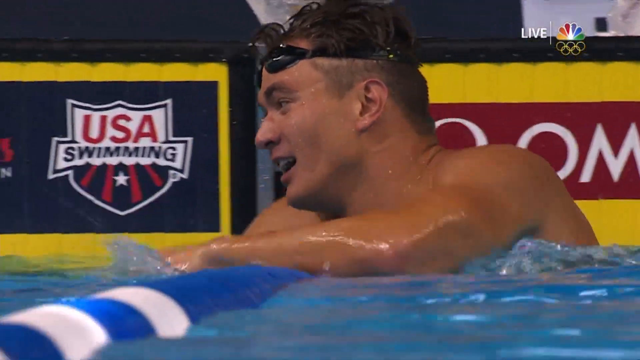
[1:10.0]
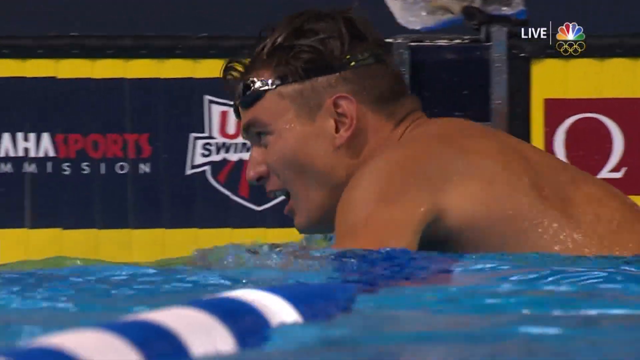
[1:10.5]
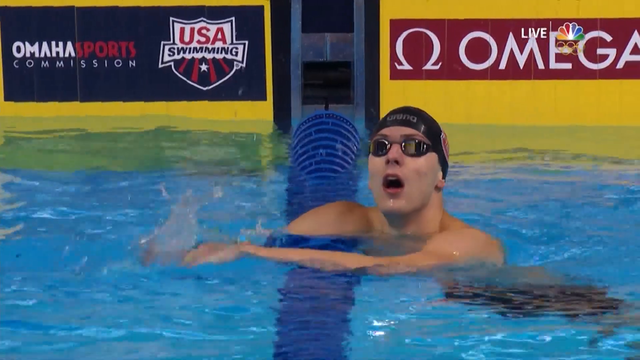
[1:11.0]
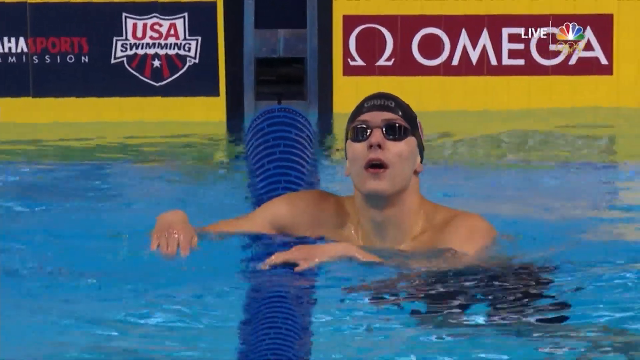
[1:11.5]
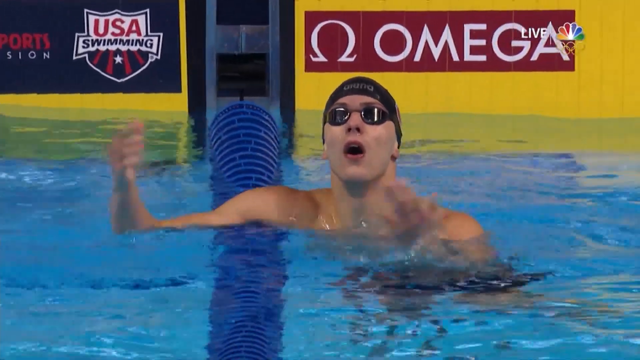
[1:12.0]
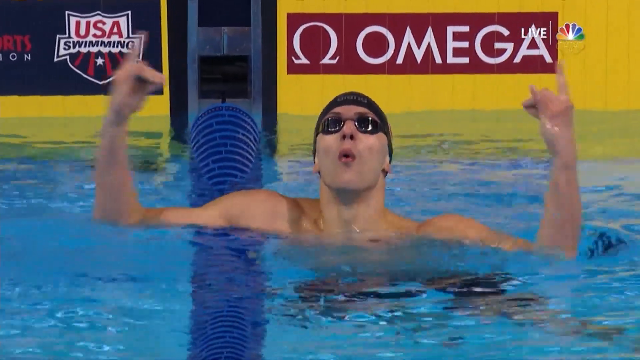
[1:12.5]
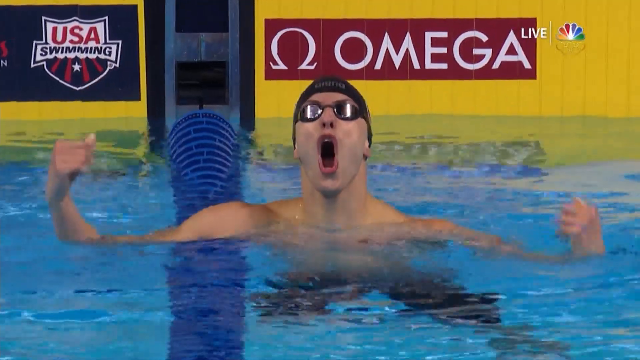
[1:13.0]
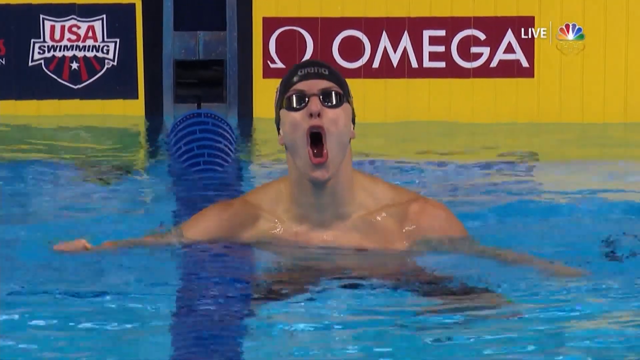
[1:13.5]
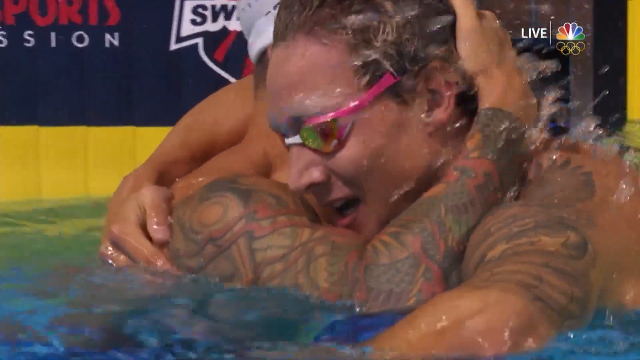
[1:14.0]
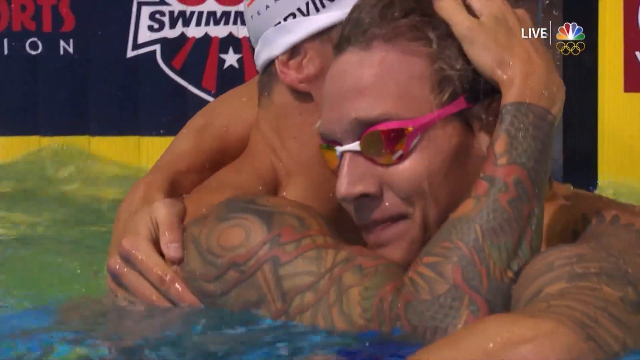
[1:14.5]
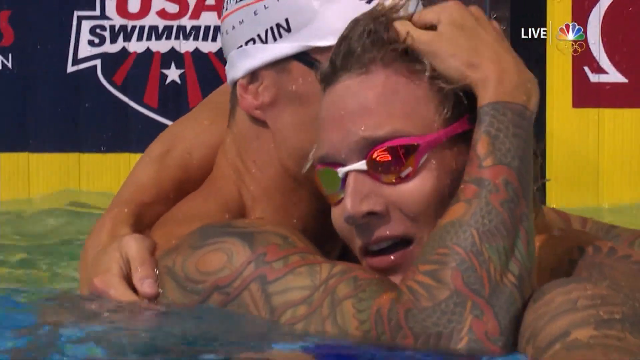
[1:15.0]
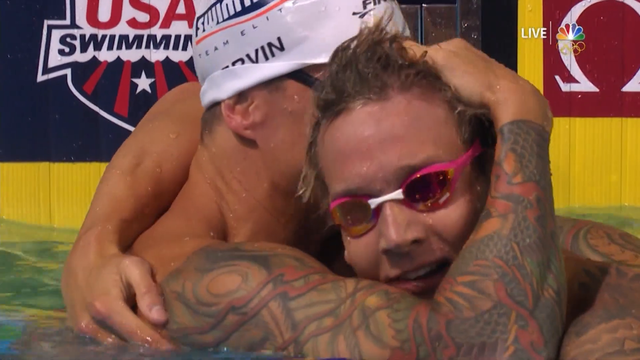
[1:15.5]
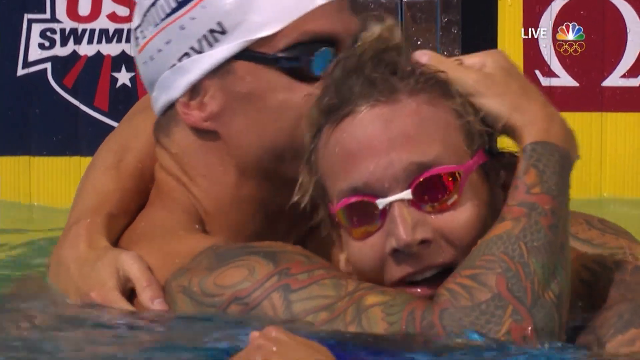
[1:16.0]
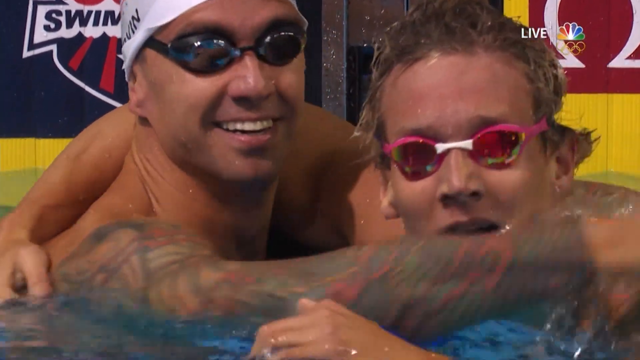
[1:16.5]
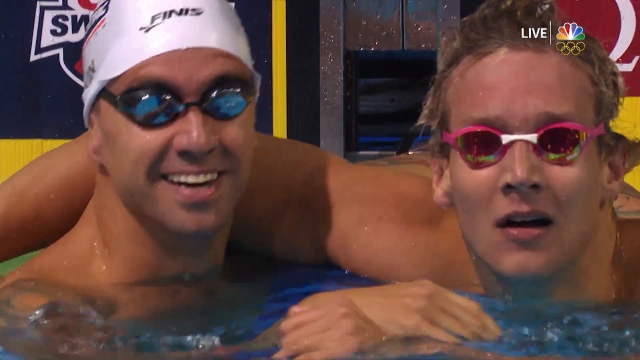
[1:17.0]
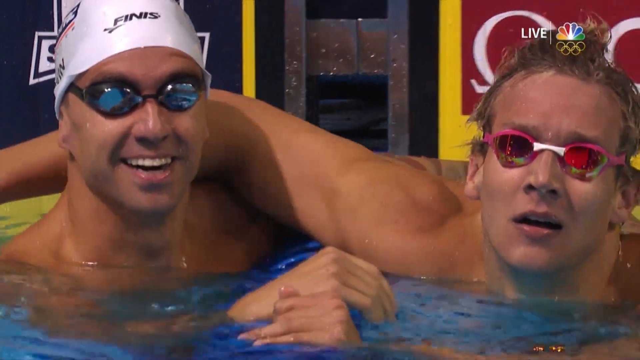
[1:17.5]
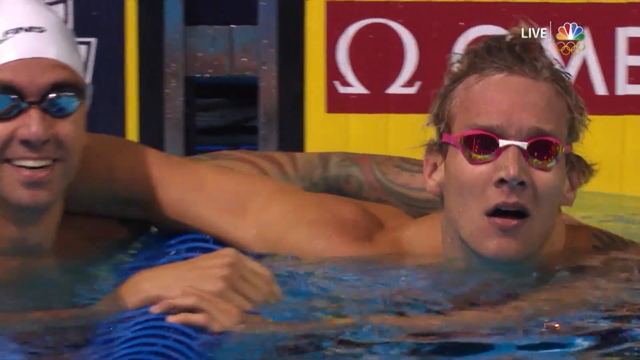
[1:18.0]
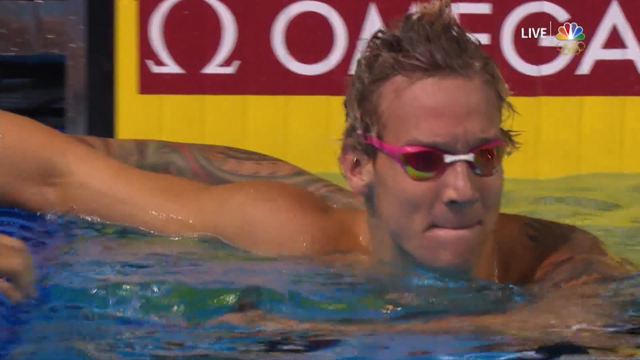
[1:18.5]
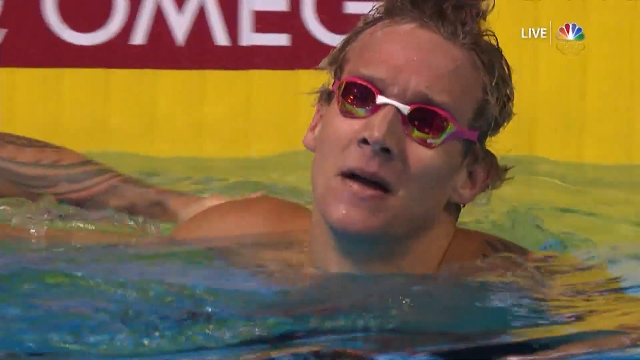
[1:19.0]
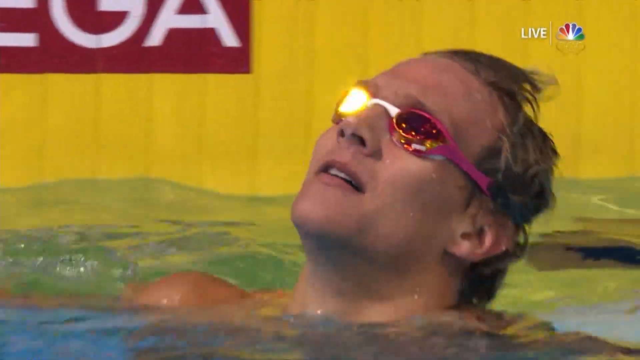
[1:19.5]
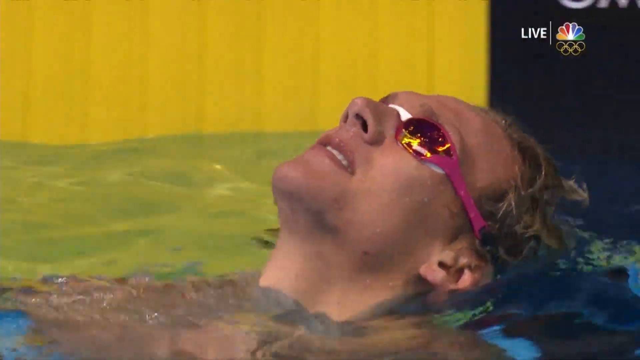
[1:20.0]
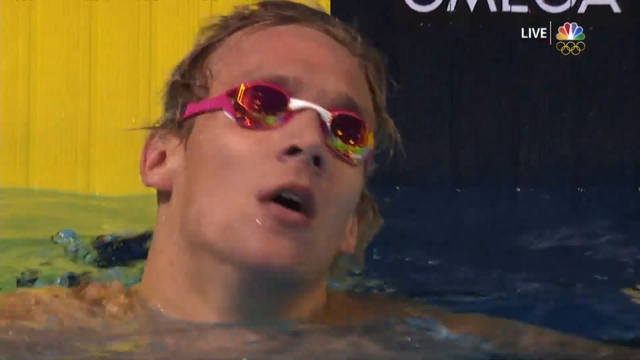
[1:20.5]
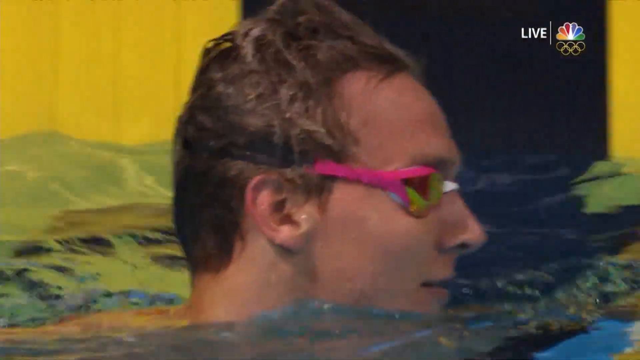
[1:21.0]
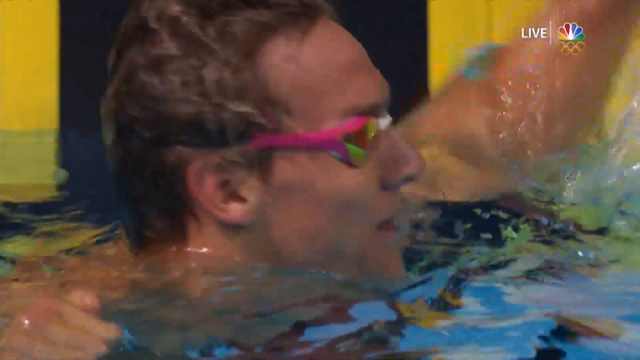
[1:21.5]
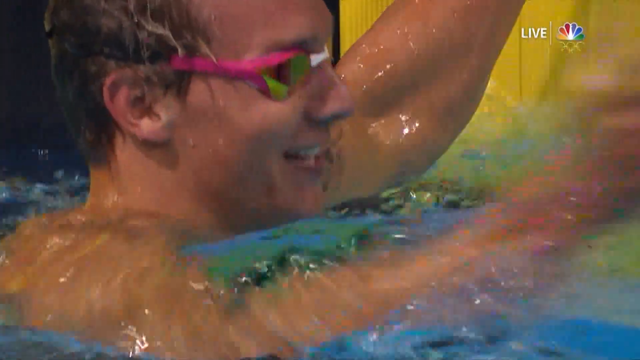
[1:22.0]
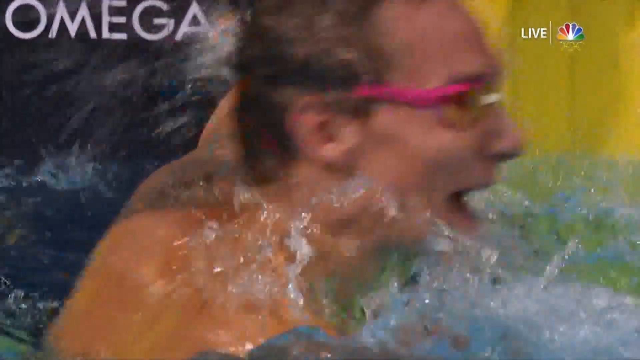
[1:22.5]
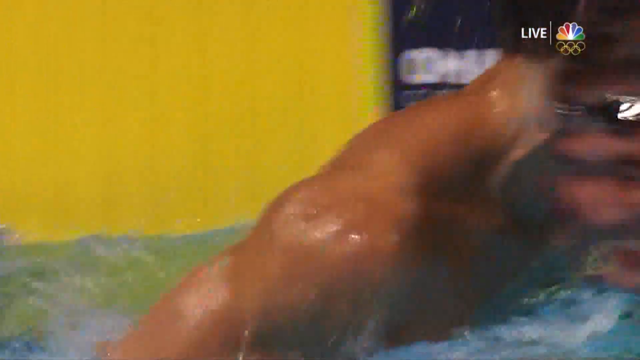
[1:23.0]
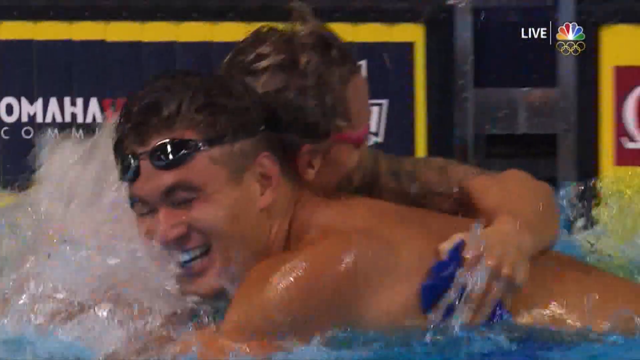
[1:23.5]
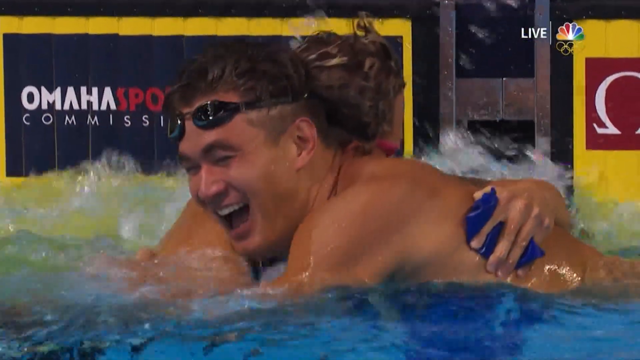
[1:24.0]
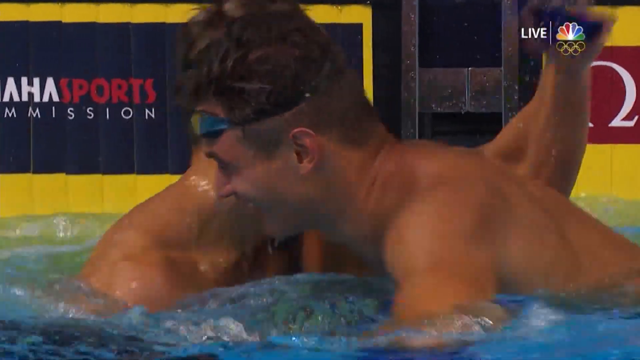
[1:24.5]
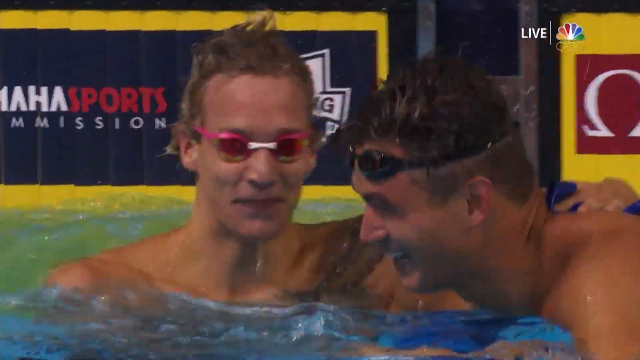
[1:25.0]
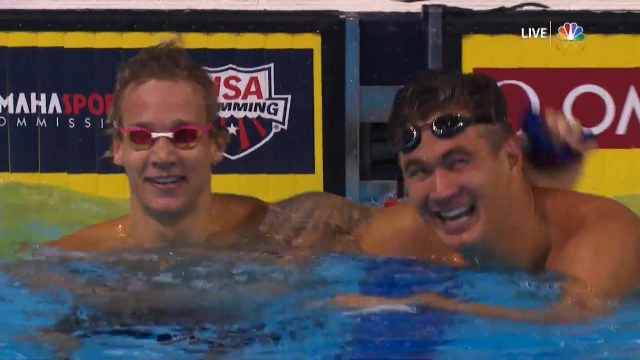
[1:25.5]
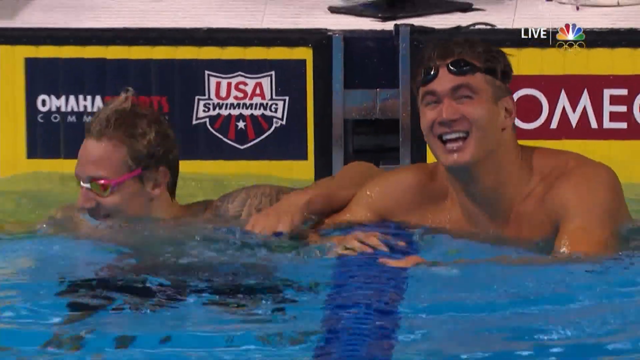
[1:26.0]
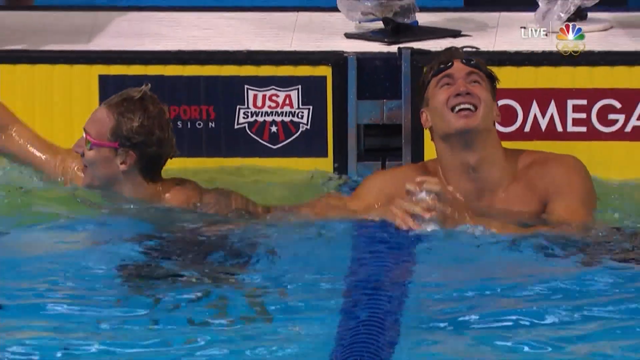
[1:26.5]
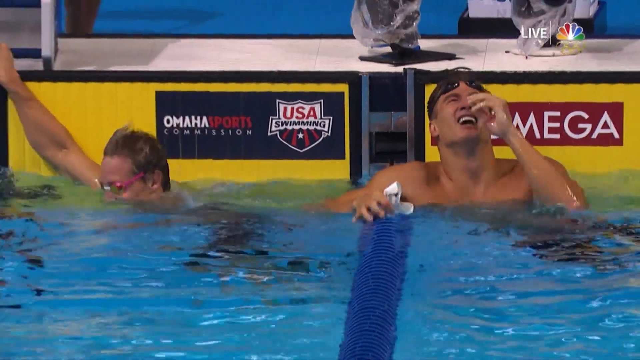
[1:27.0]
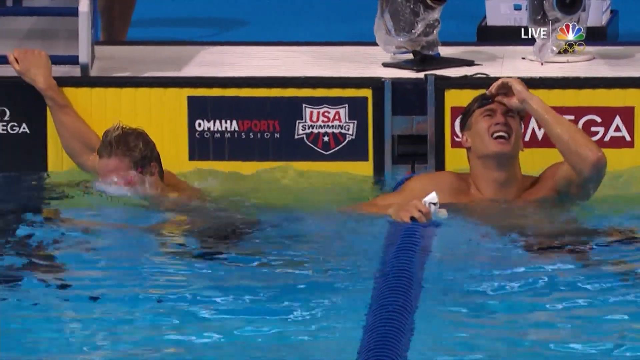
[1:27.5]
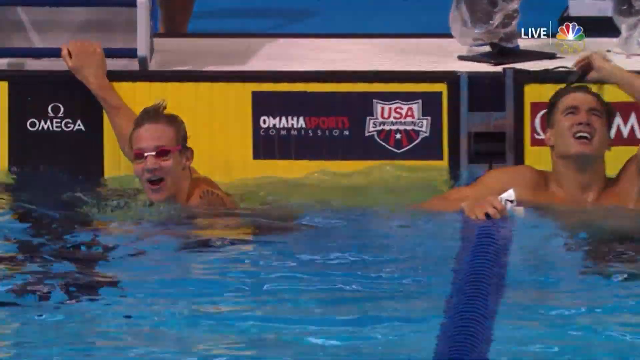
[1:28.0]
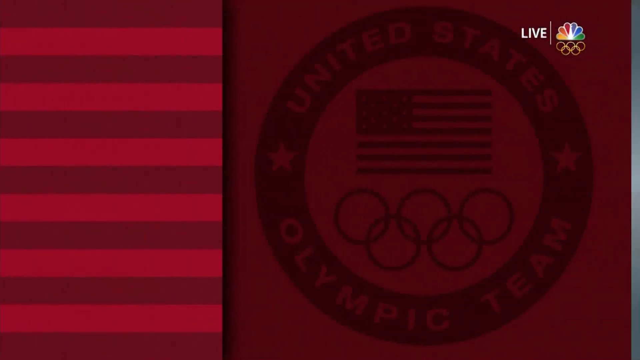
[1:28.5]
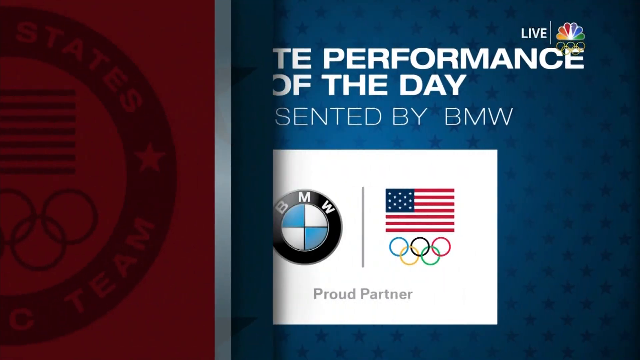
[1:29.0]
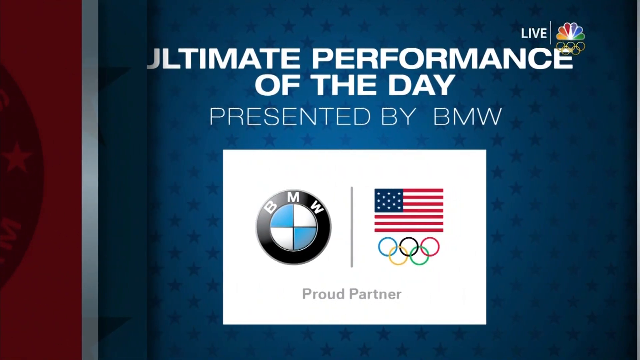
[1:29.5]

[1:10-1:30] The camera stays focused on the winner, showing his side view. Another swimmer has both hands raised up. Two swimmers hug each other as they smile; it looks like they made the medalling positions. The swimmer on the right wears pink and white swim goggles, while the one on the left wears dark blue and black swim goggles and has tattoos on his hands. The camera focuses again on two swimmers jubilating. A sponsor display follows: the sponsor is BMW, and white capital letters on the screen read "Ultimate performance of the day presented by BMW". Next comes a white card design with a BMW logo on the left and the United States flag and Olympic rings on the right, with "proud partner" written below in gray. The backdrop is blue with little dark blue stars on it. This display stays on screen for a while.